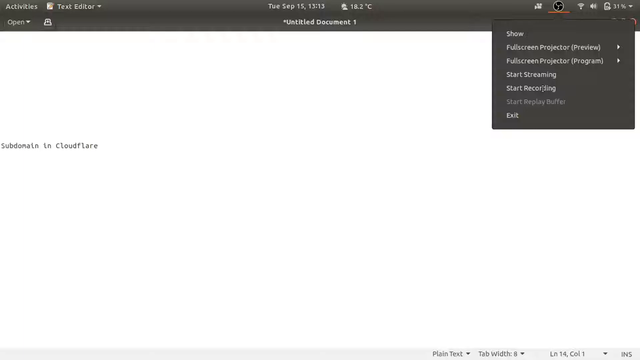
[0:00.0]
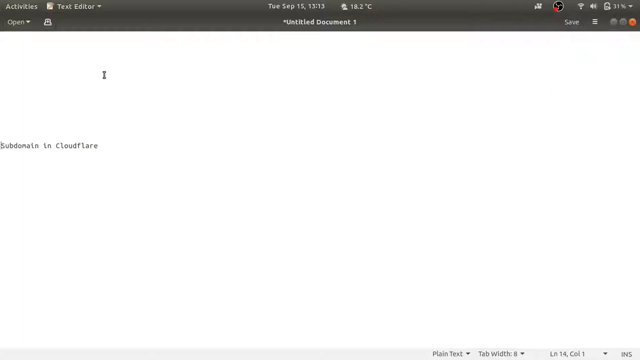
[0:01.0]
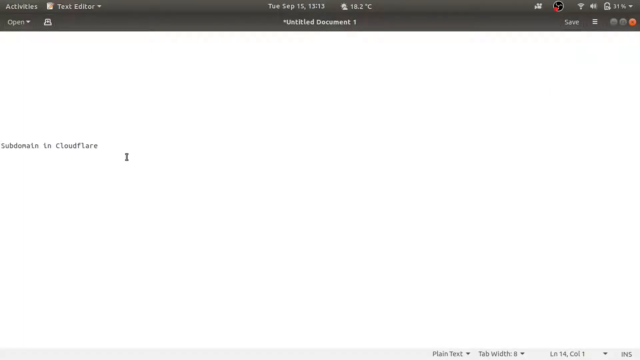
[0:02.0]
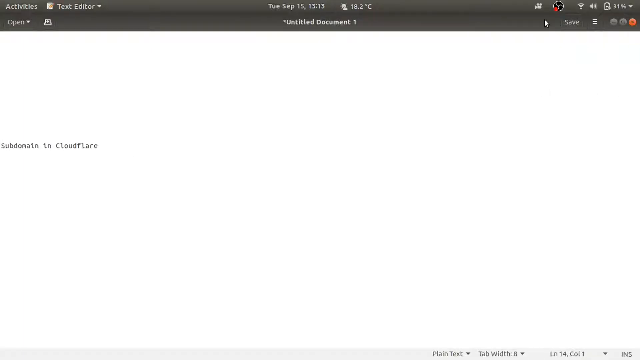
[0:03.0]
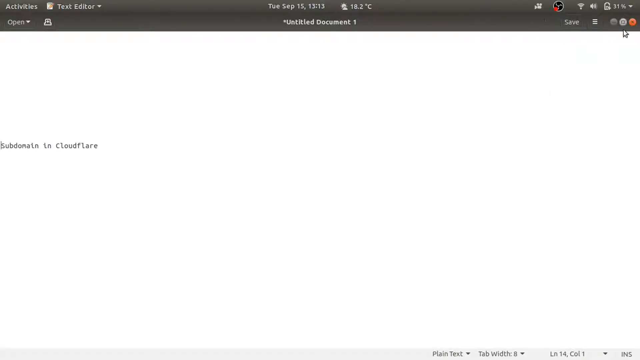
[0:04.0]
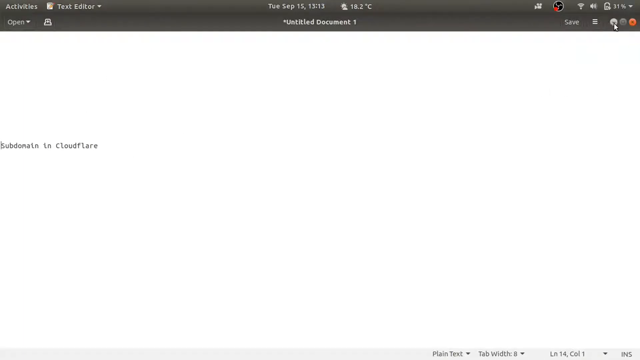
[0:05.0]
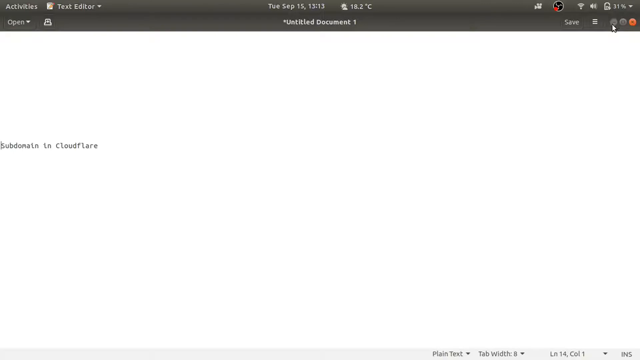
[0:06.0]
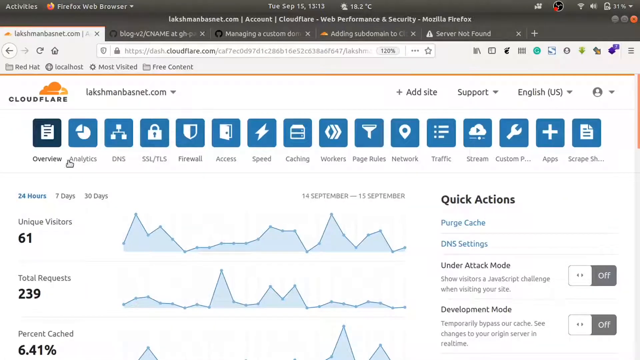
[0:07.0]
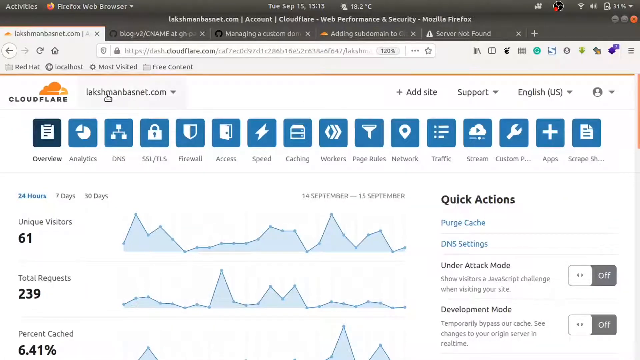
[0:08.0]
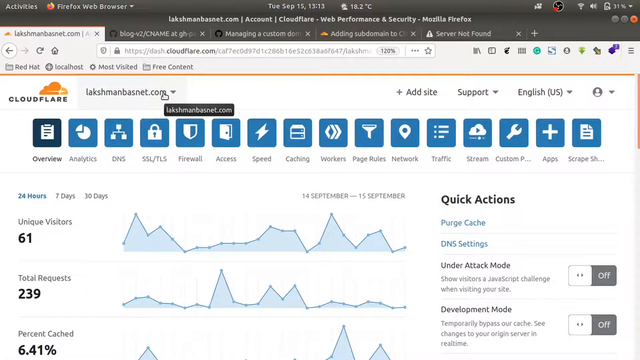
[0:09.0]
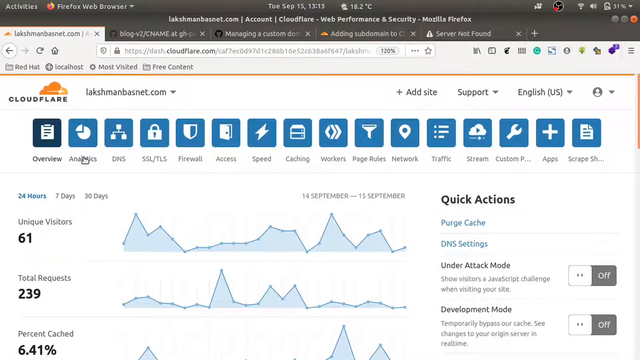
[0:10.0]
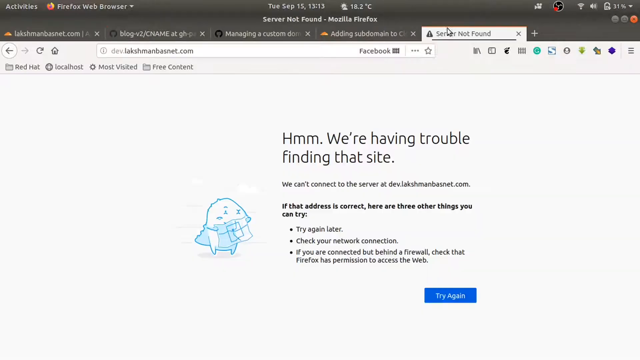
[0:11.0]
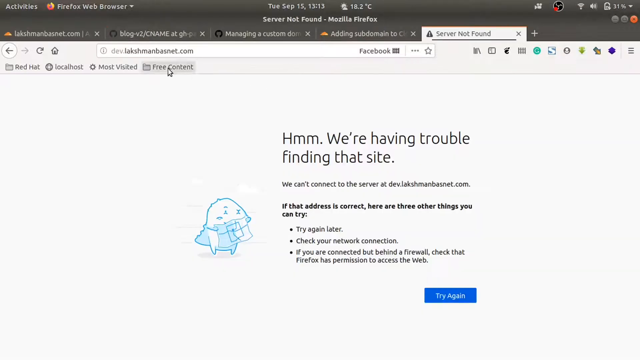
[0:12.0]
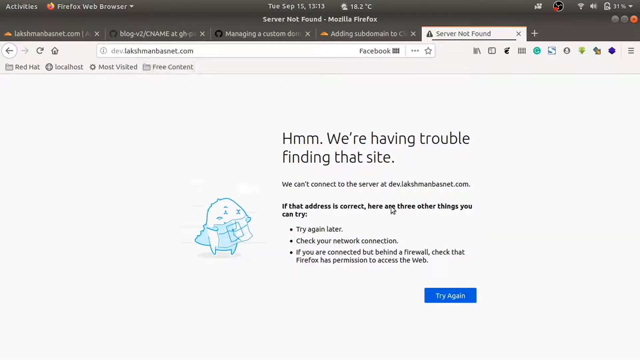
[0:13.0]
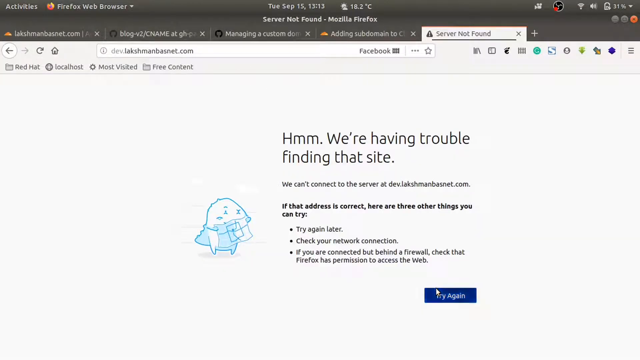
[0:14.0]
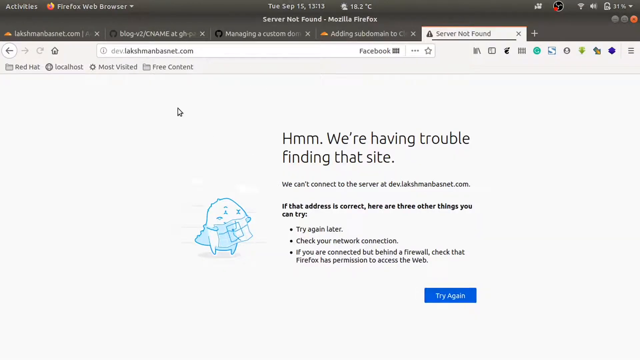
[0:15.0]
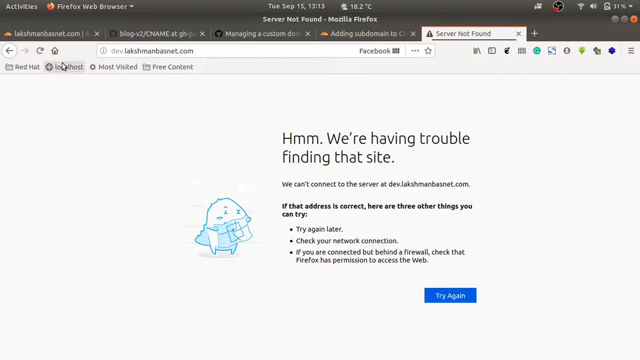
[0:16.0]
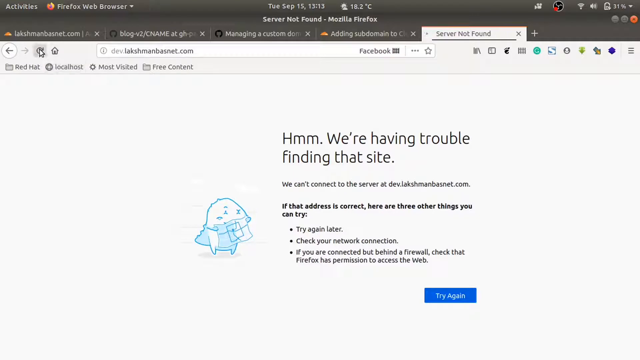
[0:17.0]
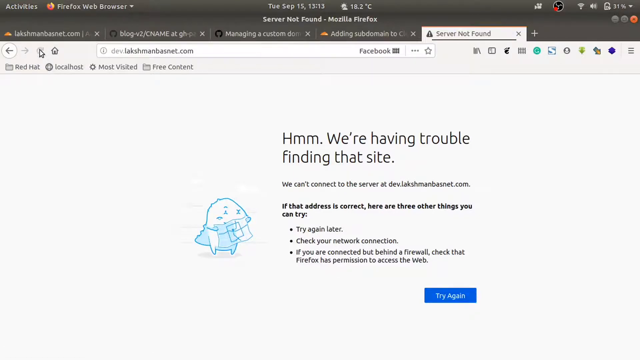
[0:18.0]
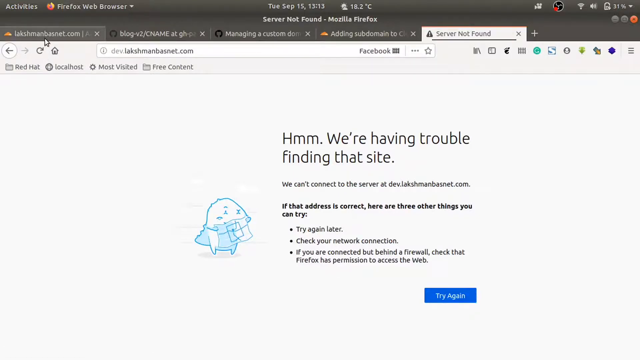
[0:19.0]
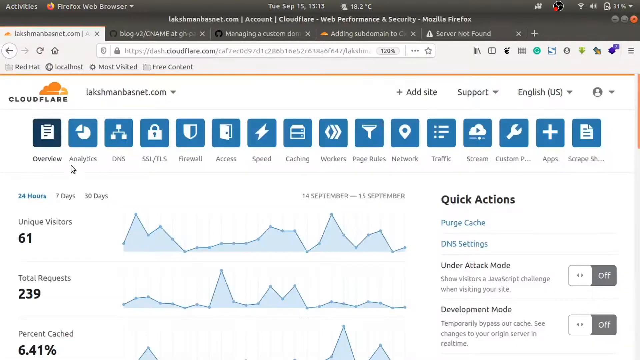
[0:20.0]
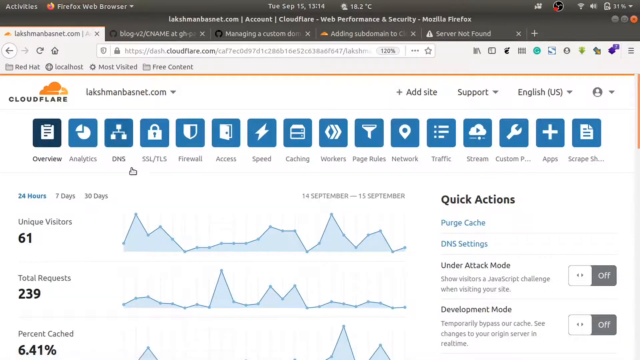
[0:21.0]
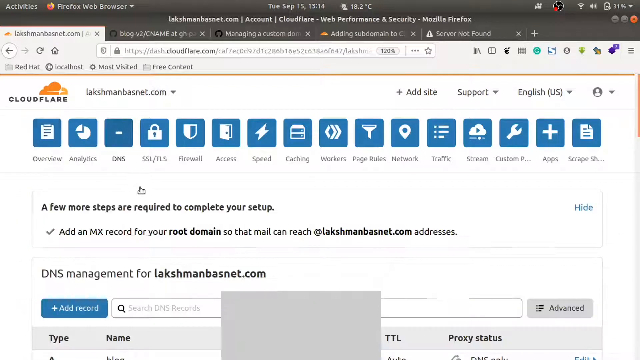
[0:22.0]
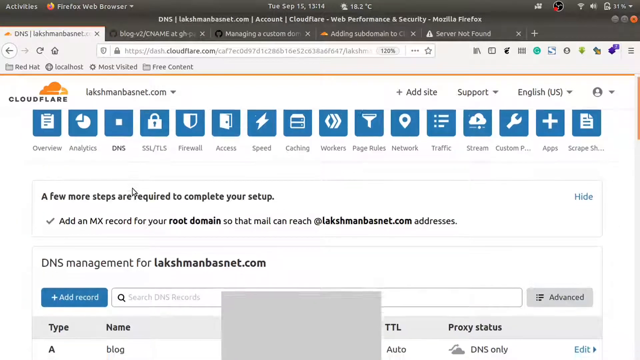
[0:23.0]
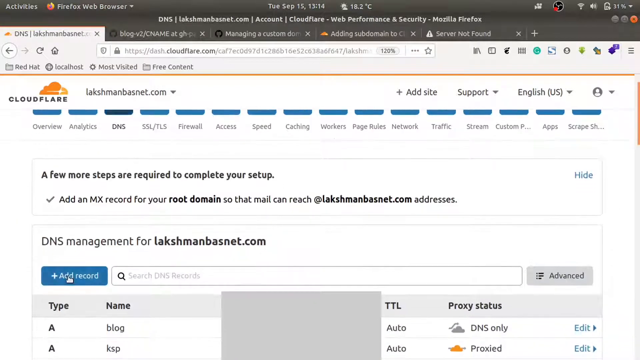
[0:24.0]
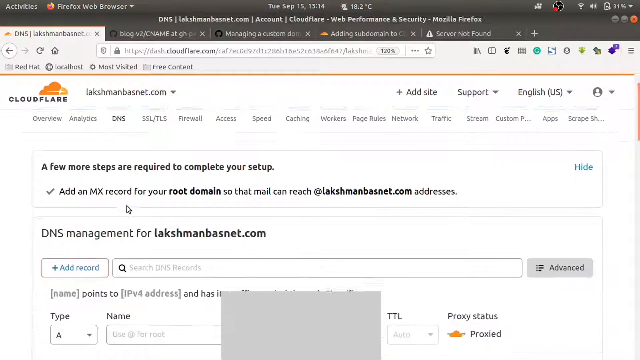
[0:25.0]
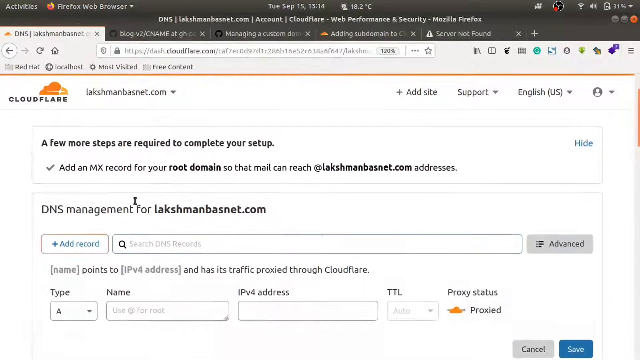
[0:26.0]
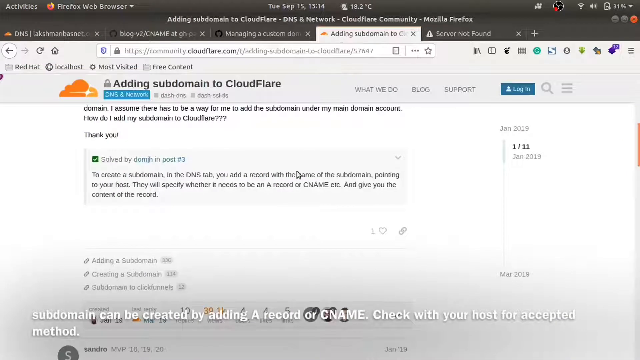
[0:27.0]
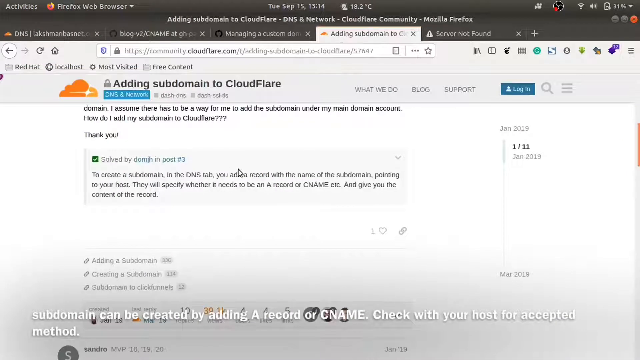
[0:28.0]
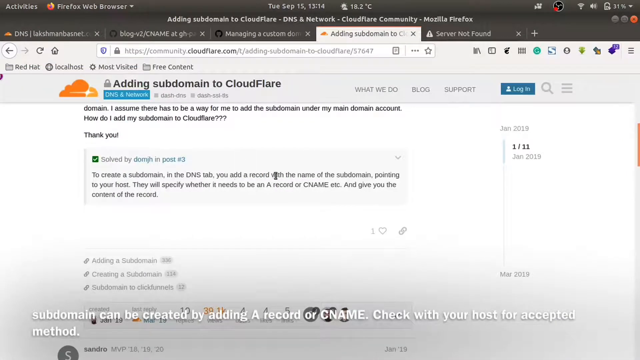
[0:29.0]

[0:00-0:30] A man is in a text editor with OBS open, working in a document. He goes back to a Firefox web browser and opens lakshmanbasnet.com, where unique visitors, total requests and many options are visible, including analytics, DNS, SSL, TLS, firewall, access, speed, caching, workers, page rules, network, traffic, streams, custom apps and scripts. There is an option to select English. He goes to another server, and a page says "we are having some trouble finding the server"; the server does not load. He returns to lakshmanbasnet.com, clicks DNS and goes back to the options. He finds a community Cloudflare post that solved his problem, which says "to create a subdomain in the DNS table you add a record with the name of subdomain pointing to your host".